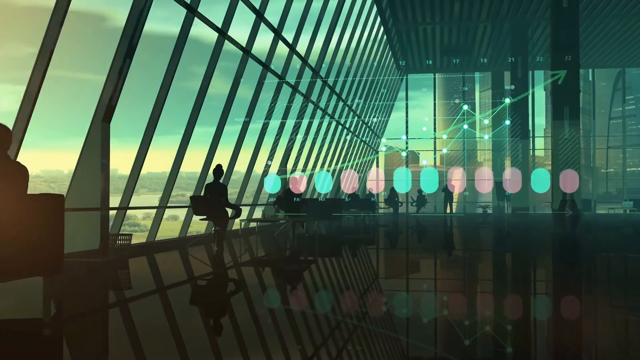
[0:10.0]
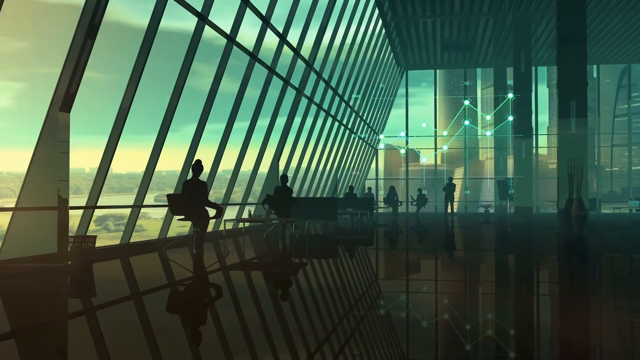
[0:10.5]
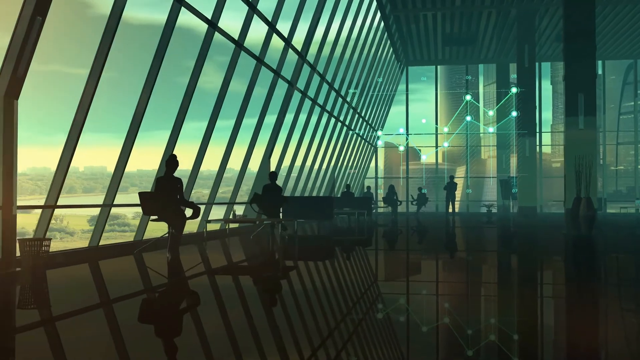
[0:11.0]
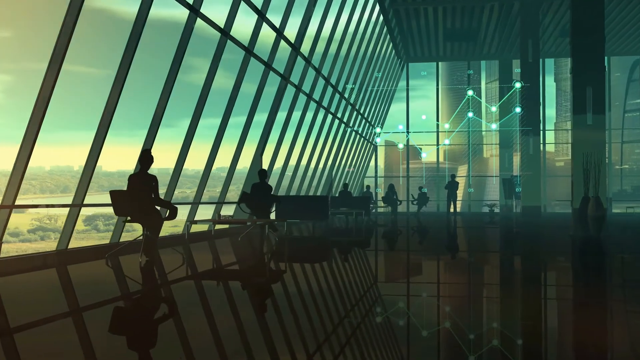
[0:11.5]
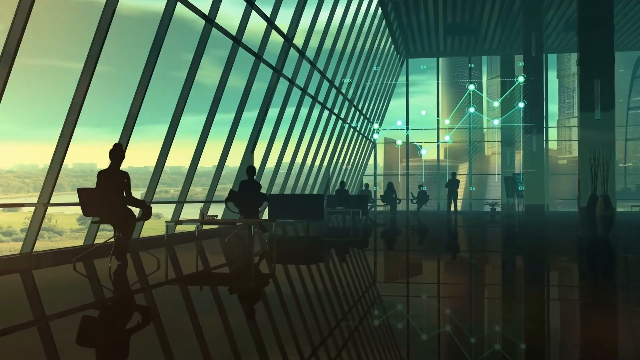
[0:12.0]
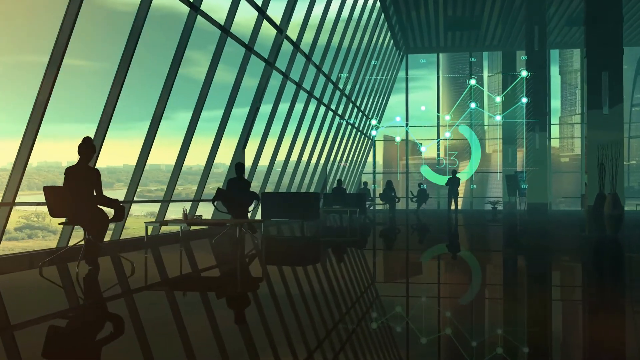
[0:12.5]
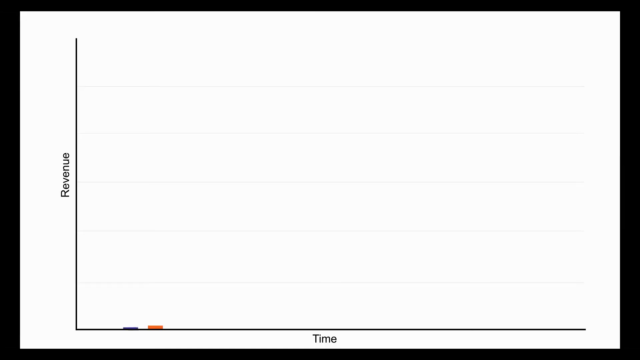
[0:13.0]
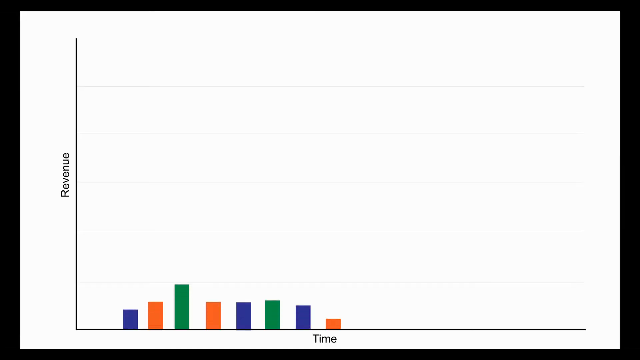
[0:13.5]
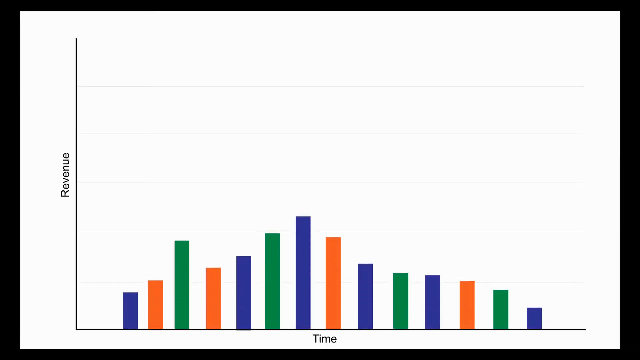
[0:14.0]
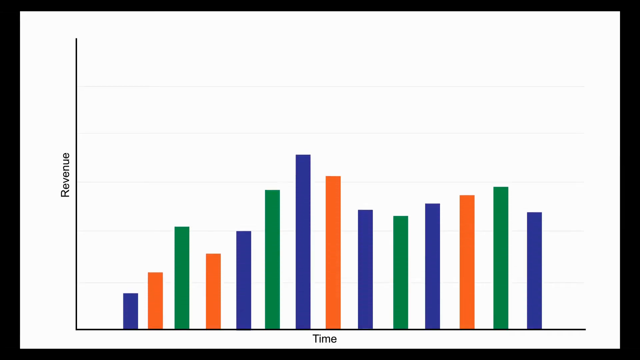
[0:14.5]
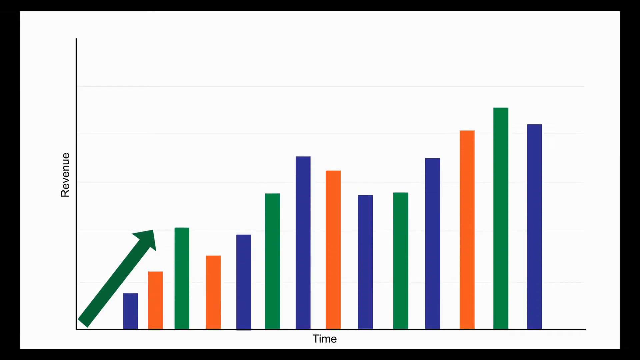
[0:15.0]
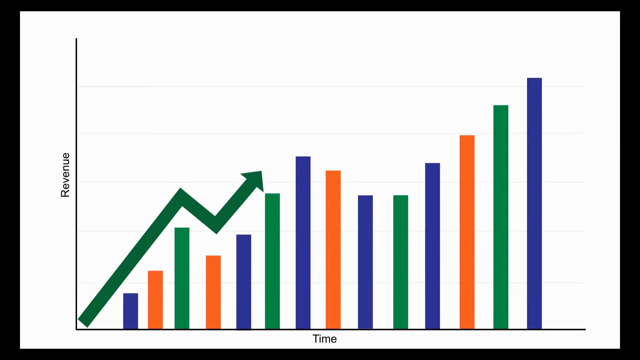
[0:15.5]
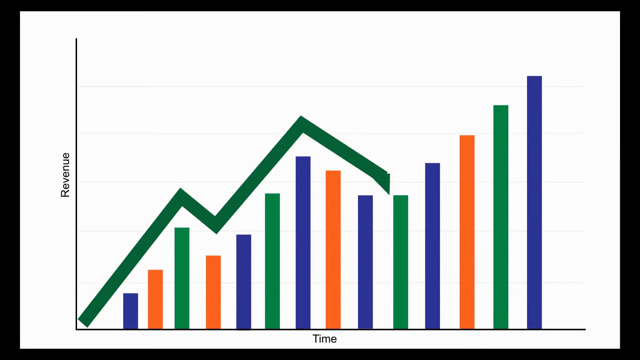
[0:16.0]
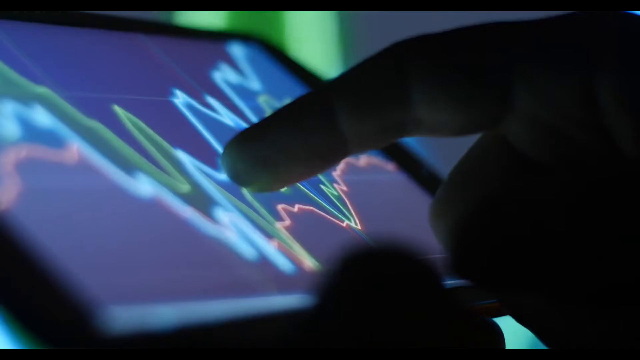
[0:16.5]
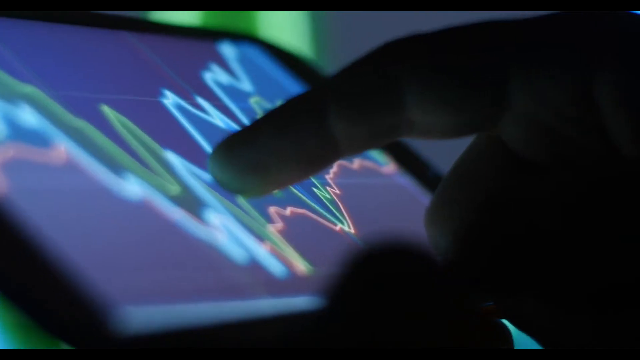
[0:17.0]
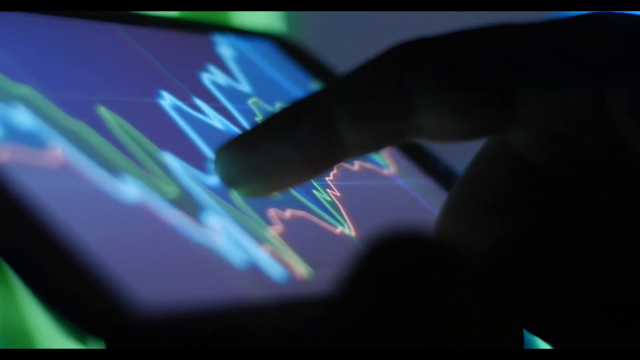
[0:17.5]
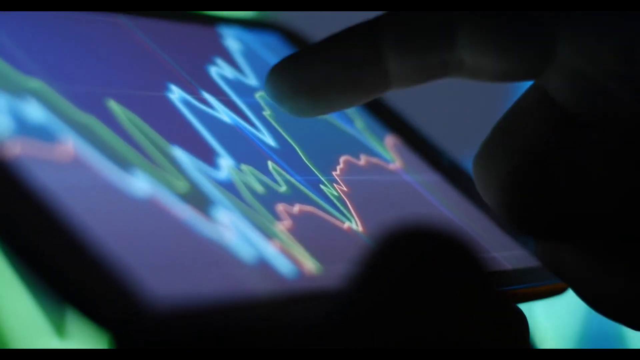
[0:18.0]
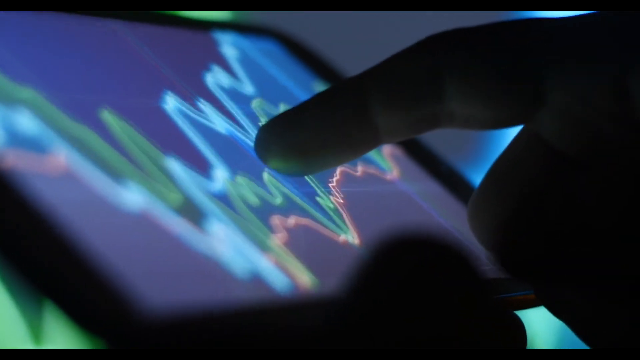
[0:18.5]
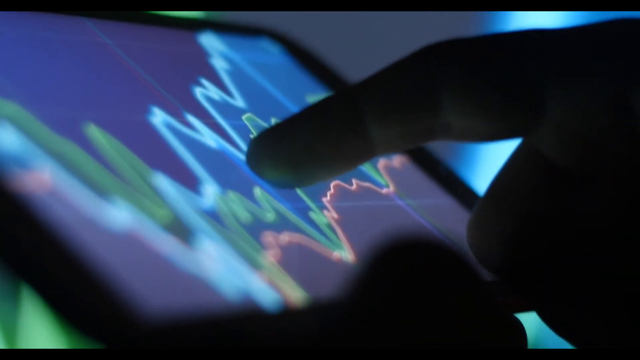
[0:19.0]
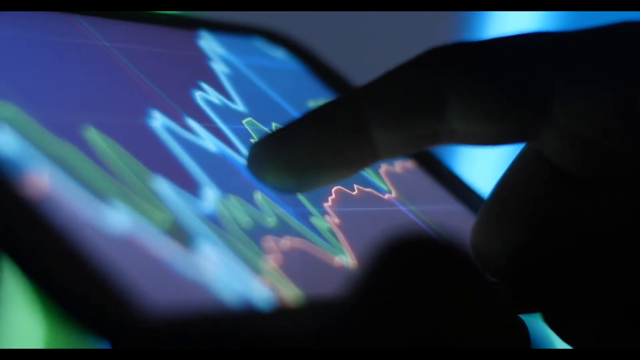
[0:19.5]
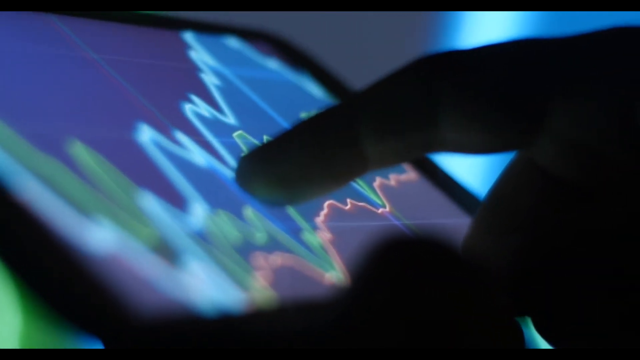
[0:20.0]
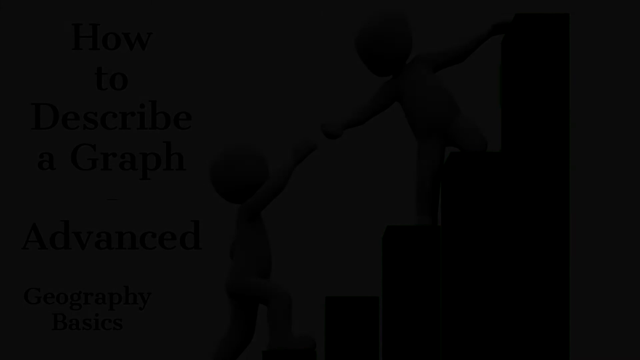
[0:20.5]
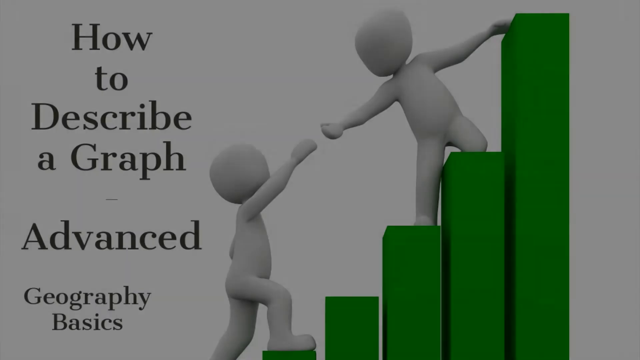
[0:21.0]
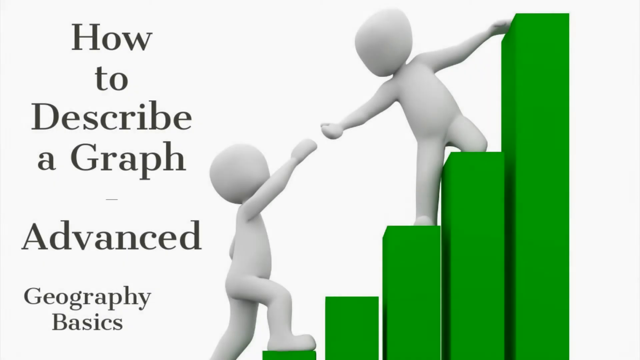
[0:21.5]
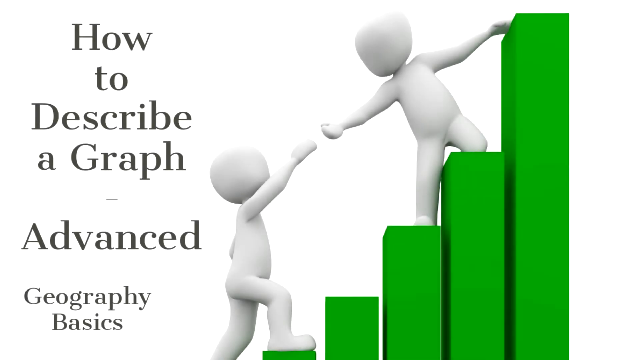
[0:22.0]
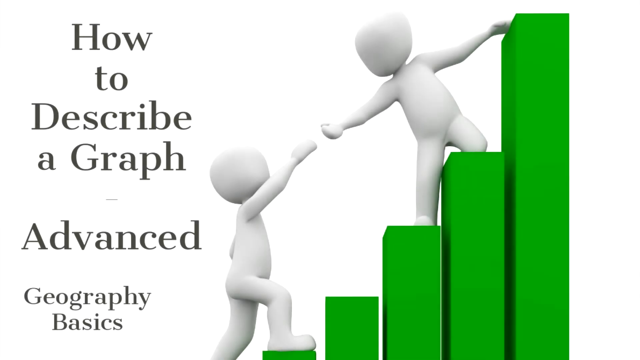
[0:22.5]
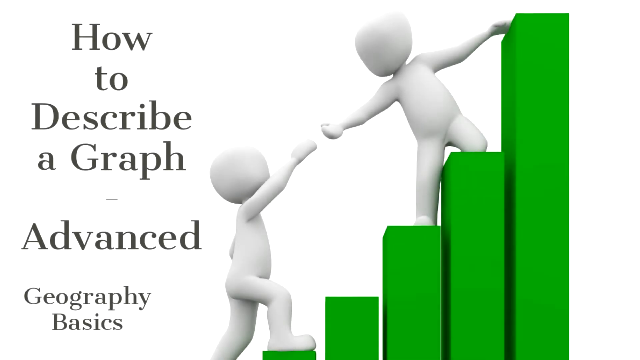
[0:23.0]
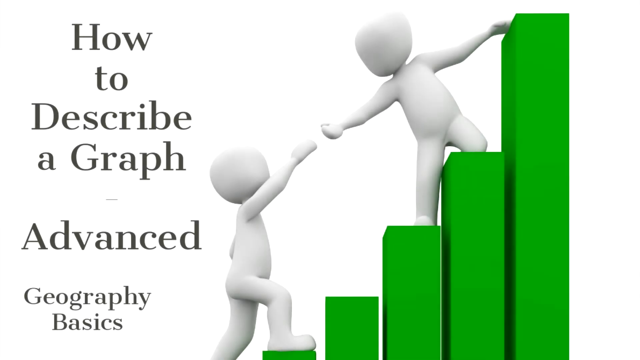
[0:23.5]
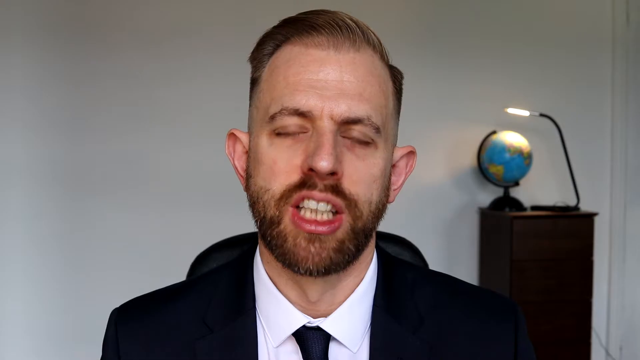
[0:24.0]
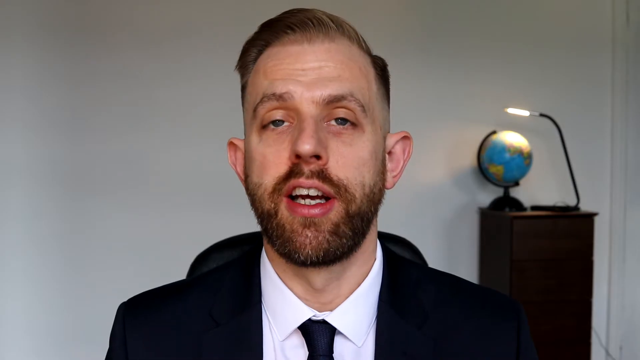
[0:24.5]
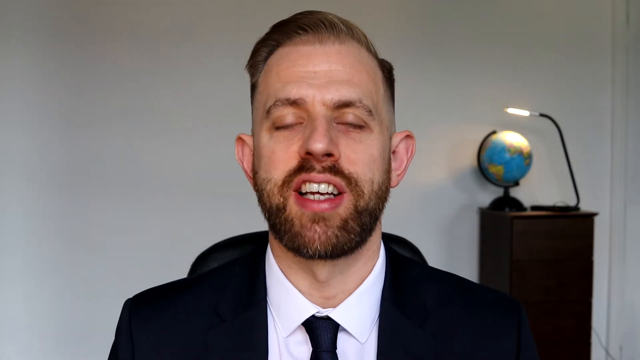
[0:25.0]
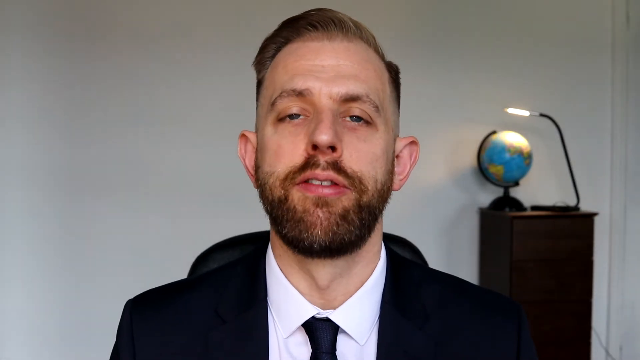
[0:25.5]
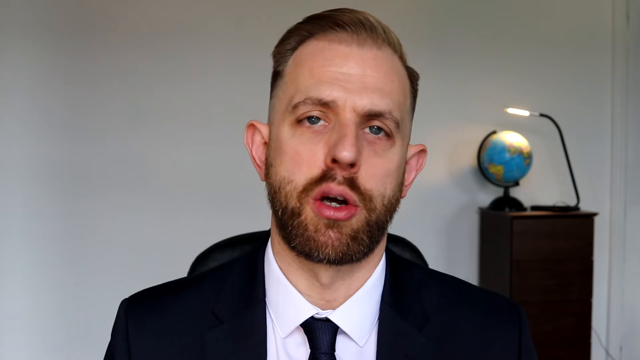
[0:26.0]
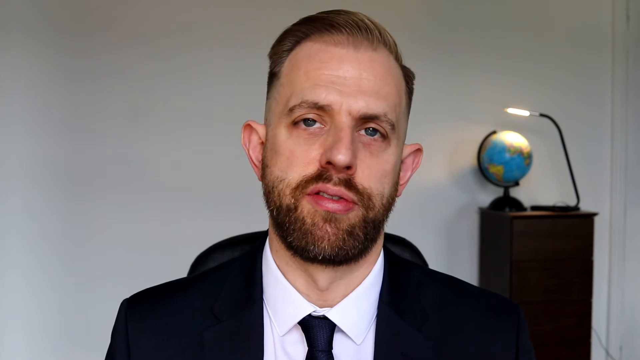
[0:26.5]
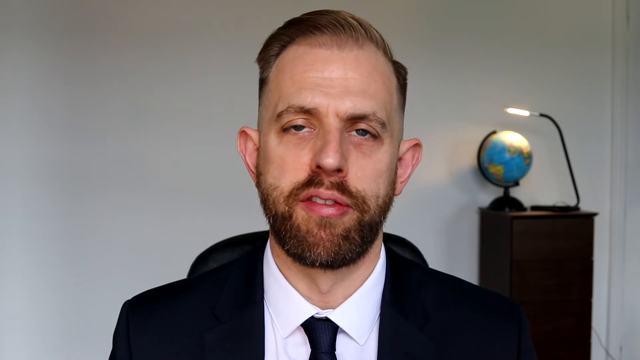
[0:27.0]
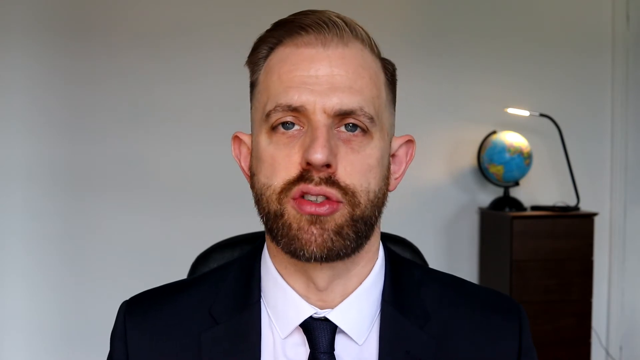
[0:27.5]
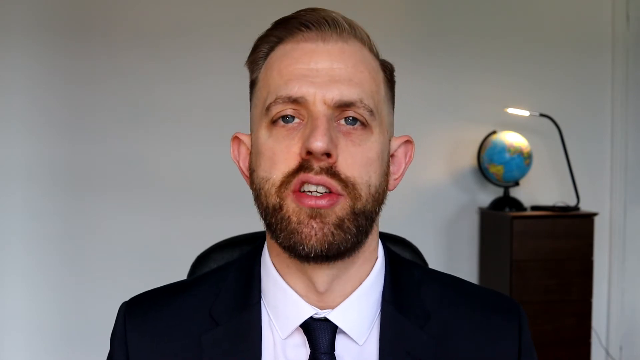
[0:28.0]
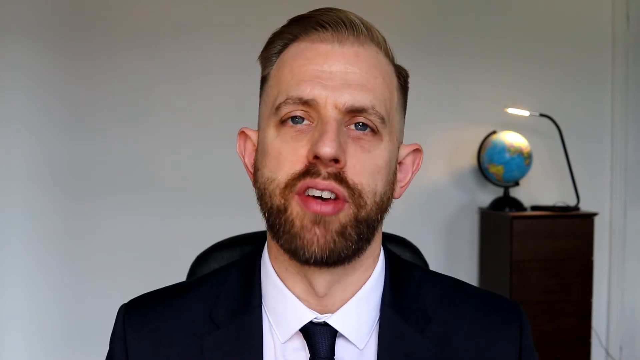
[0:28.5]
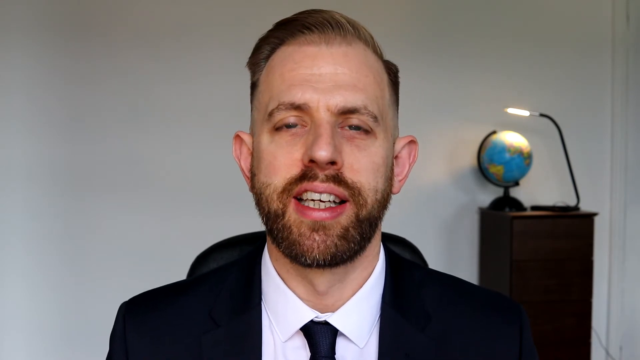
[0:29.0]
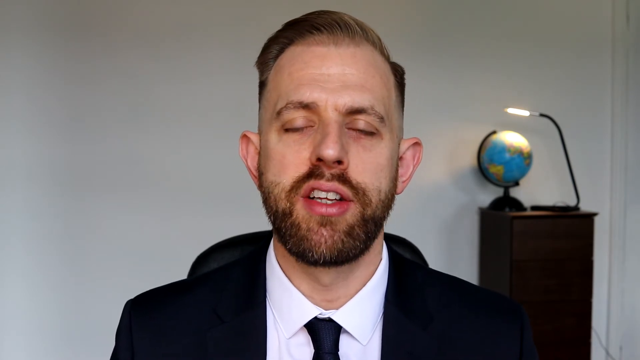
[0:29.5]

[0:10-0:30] A diagram shows the structure of the UK economy fluctuating up and down across the year, from January to December. The yellow line is about stable through January, February and March and then starts to rise from about October. The orange line stays at a moderate, average level and then starts to drop, around March and around August and September. An industry marked with blue dots stays around average and keeps dropping until it is down by the end of the year. The yellow line is the only industry shown rising on the diagram.